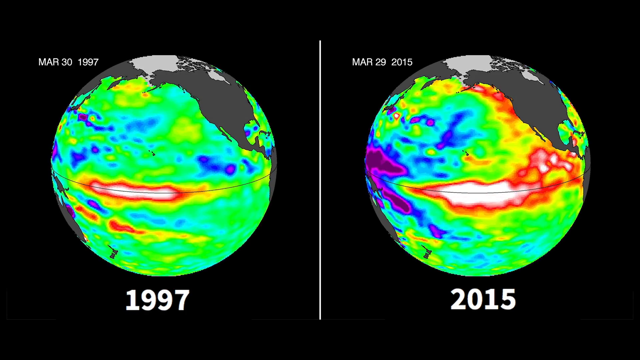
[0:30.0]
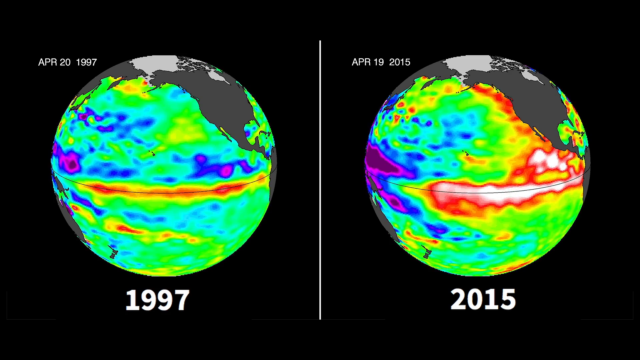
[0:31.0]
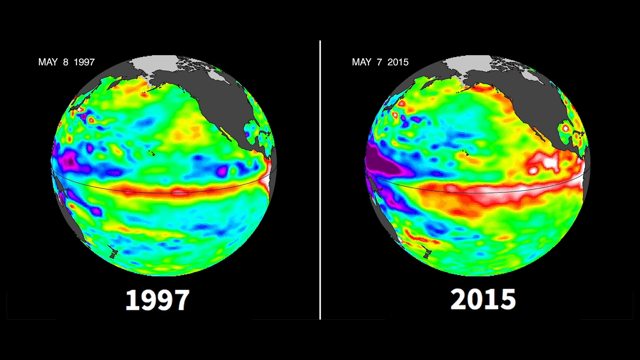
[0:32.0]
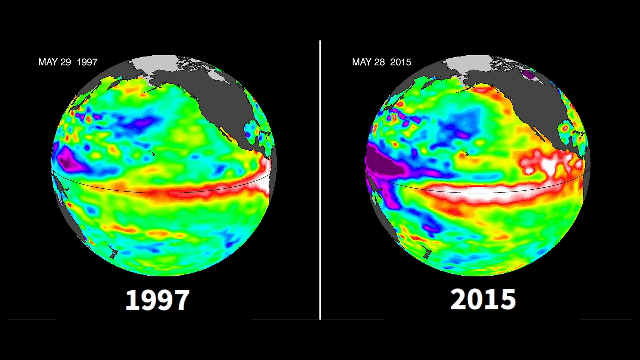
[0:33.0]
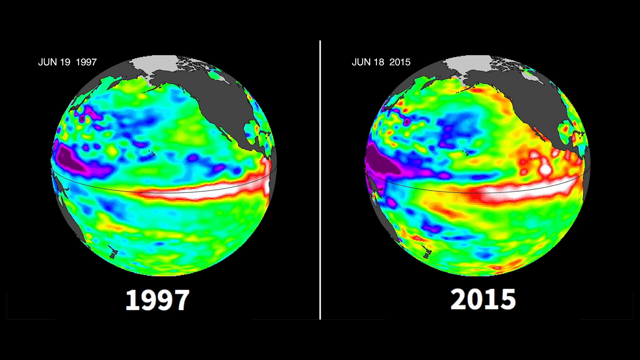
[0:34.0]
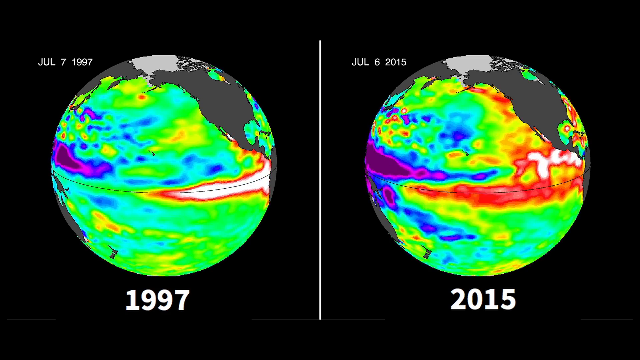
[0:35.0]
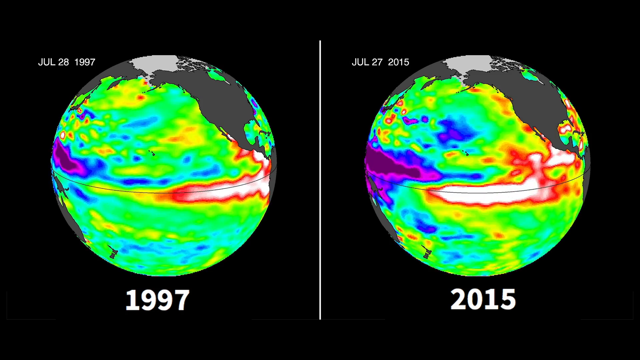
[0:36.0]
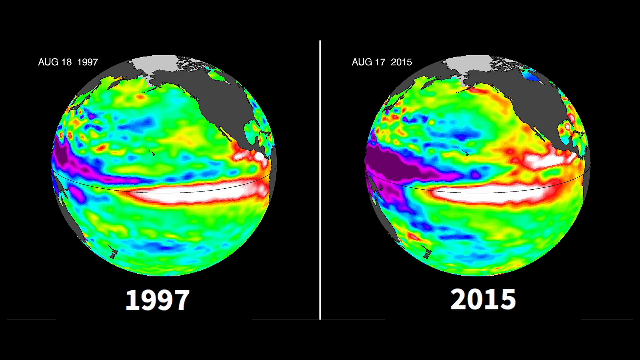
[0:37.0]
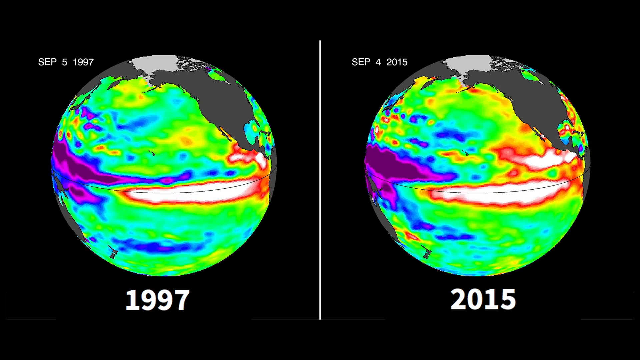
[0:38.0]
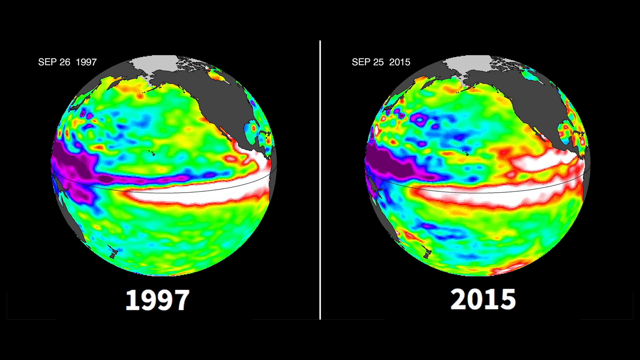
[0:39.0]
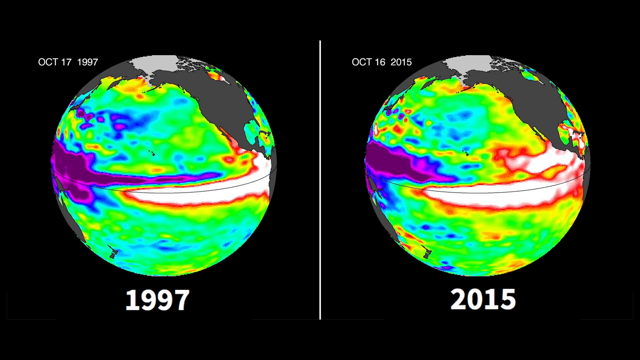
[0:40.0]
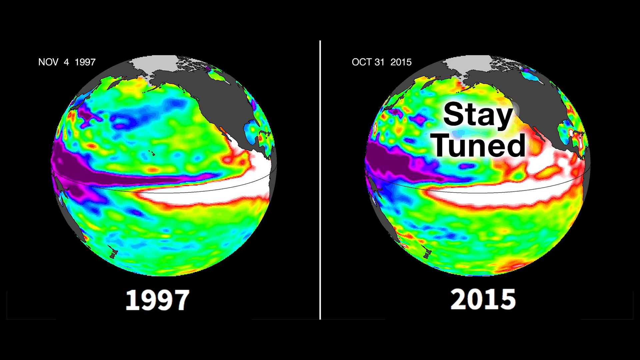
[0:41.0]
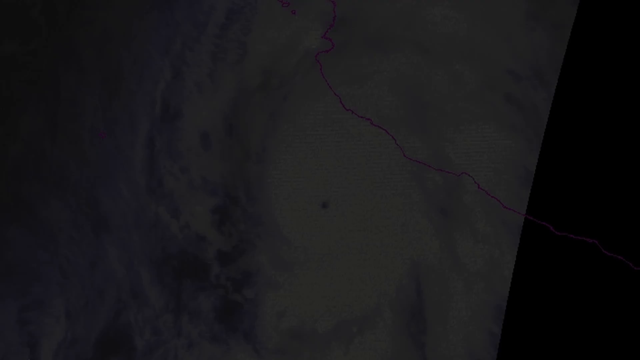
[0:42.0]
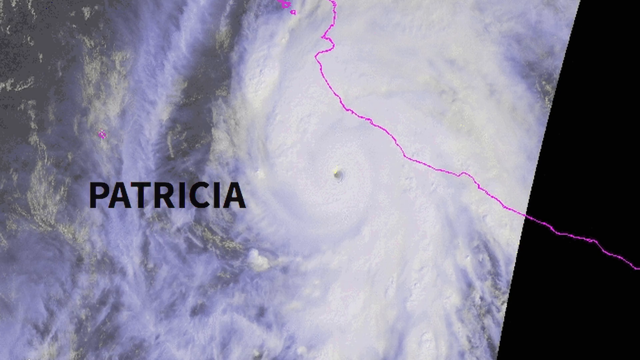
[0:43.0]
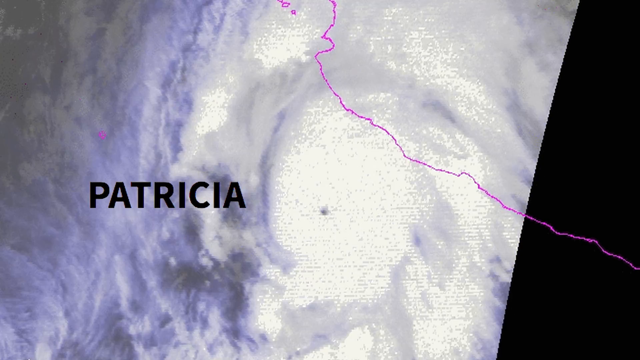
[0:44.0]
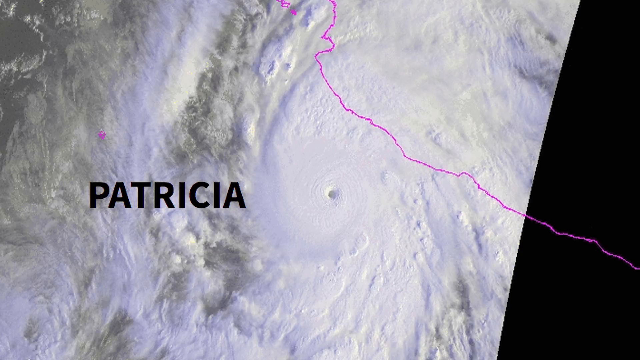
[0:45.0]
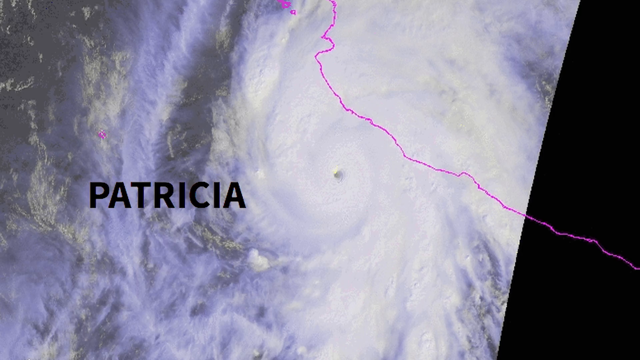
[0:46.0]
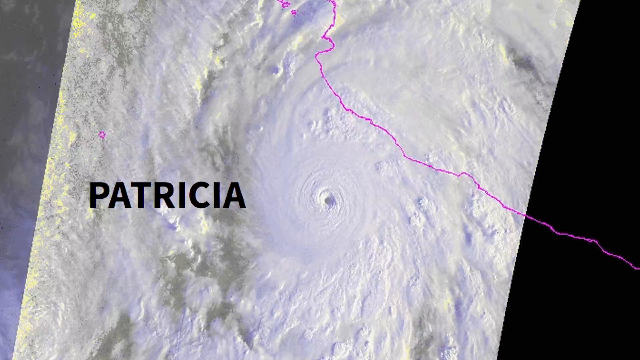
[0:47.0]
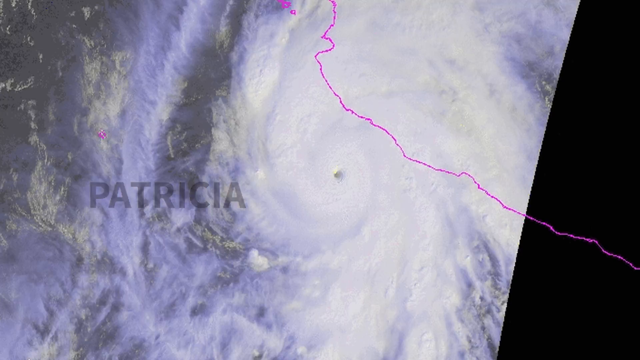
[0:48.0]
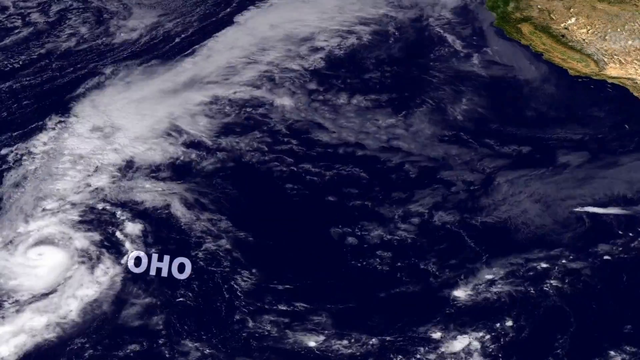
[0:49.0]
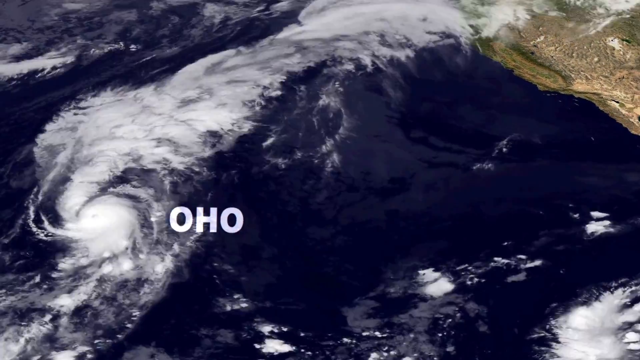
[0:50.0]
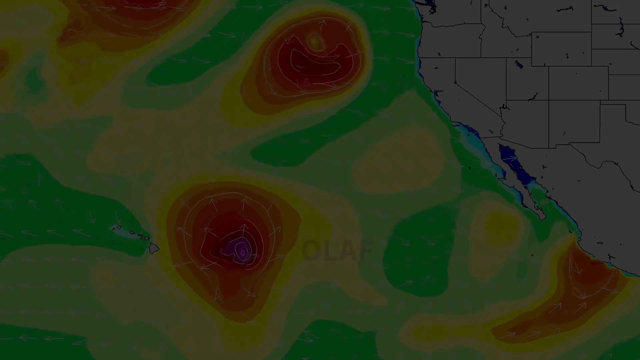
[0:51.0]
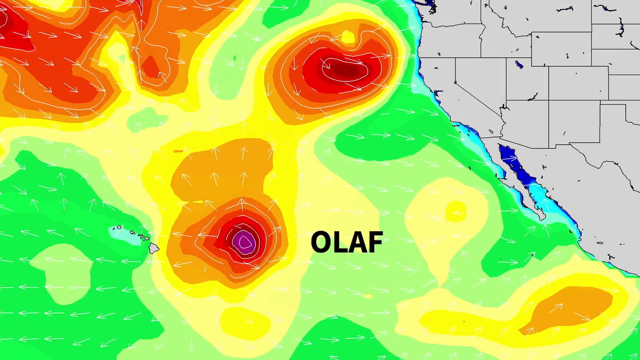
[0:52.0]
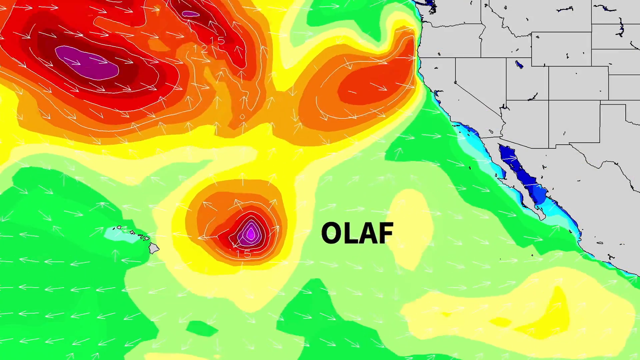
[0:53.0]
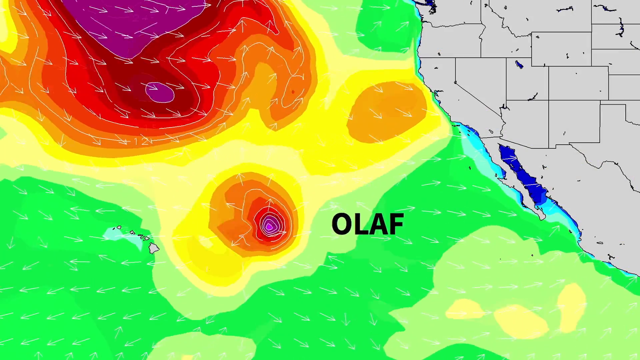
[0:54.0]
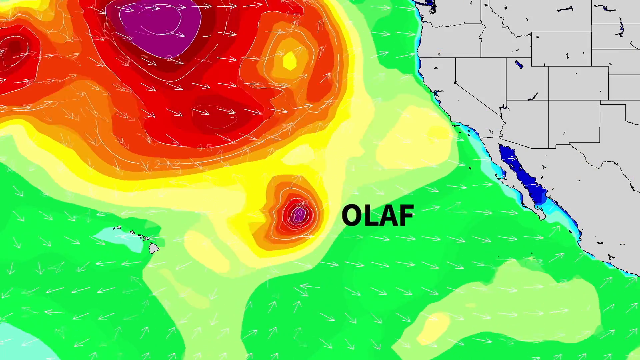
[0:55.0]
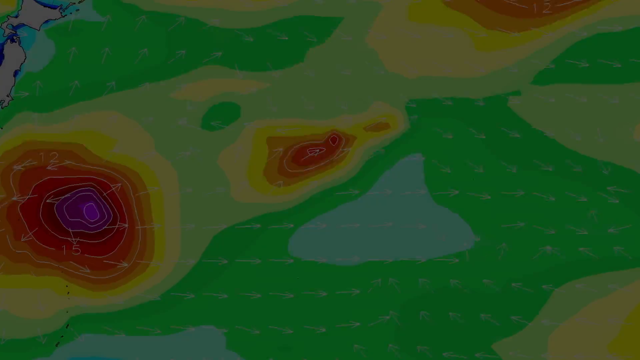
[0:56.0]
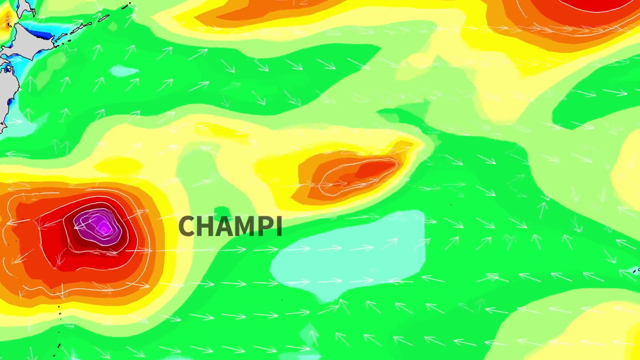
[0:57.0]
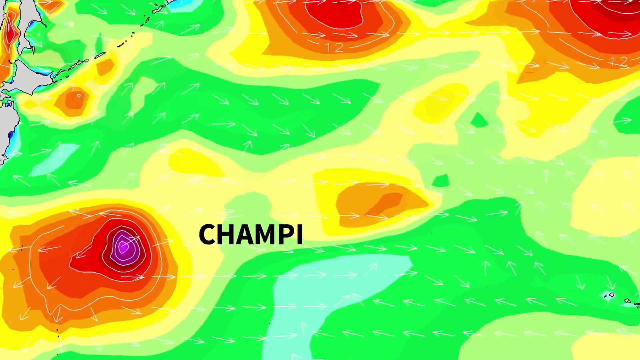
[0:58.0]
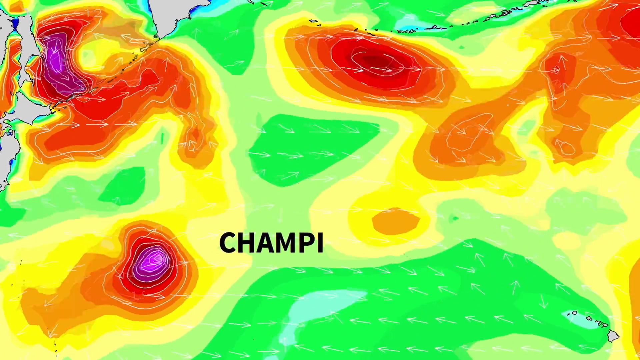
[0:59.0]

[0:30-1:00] Two pictures appear side by side as a comparison. The one on the left is from April 20, 1997, and shows a very thin red line circling around the globe, along with some bluish and purple spots and a lot of green. The one on the right, from April 19, 2015, has much more red, with some white running through the red, making it more intense, as well as much more purple and more yellow. There is noticeably less green, which is largely covered by blues, purples and reds. Both play out as an animation: on the left, the red line becomes somewhat shorter but expands with whiteness in the middle, while on the right it stays expanded and possibly expands even further, with more white inside the red.